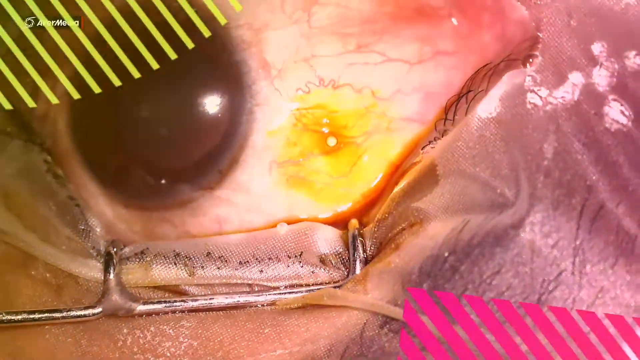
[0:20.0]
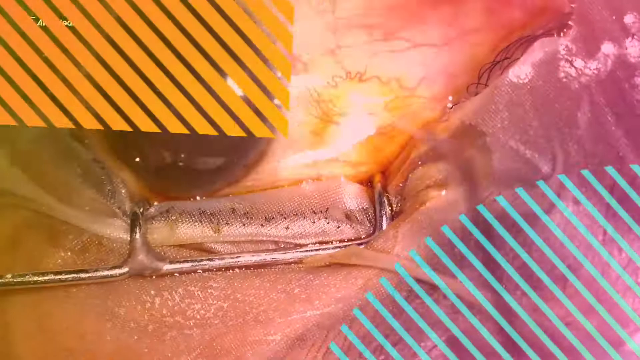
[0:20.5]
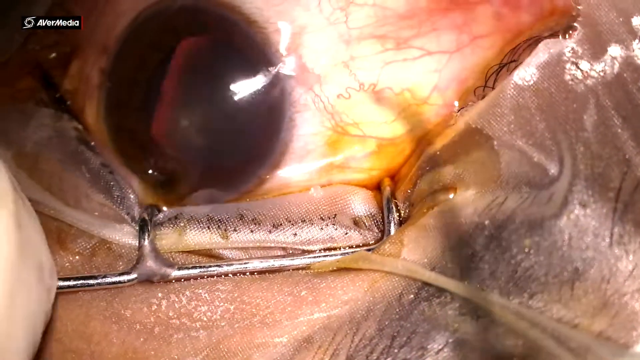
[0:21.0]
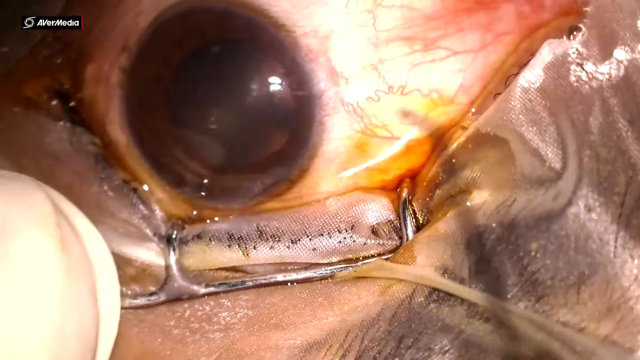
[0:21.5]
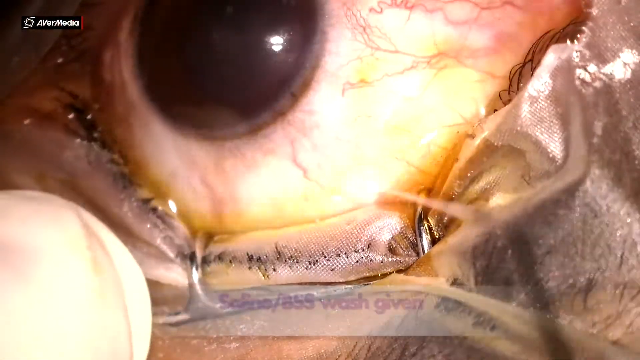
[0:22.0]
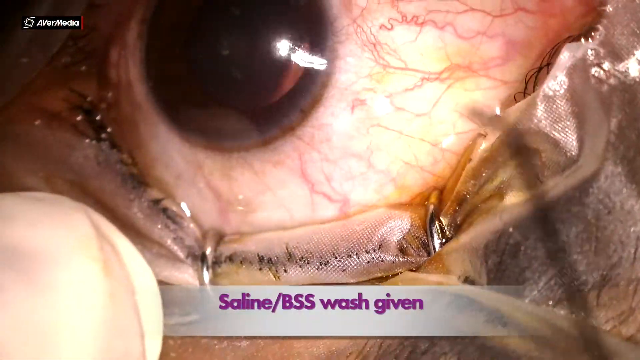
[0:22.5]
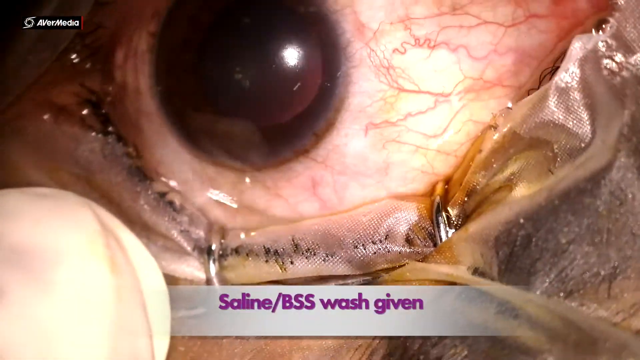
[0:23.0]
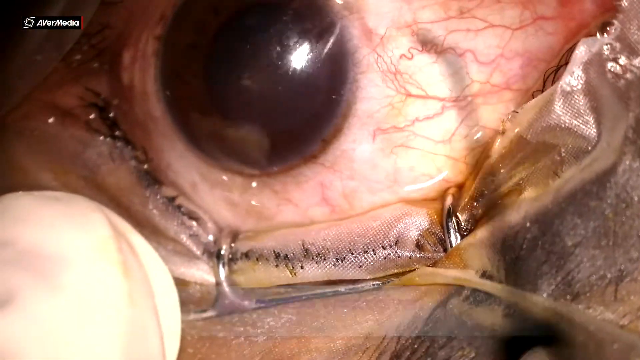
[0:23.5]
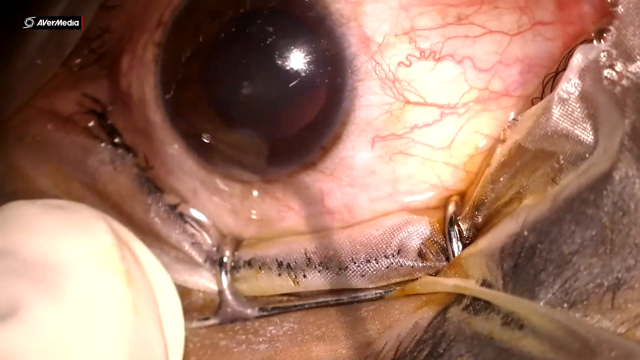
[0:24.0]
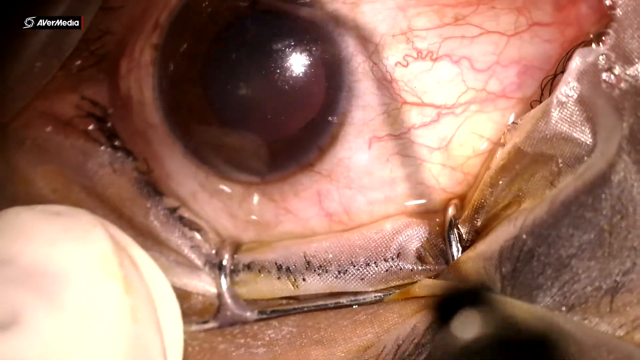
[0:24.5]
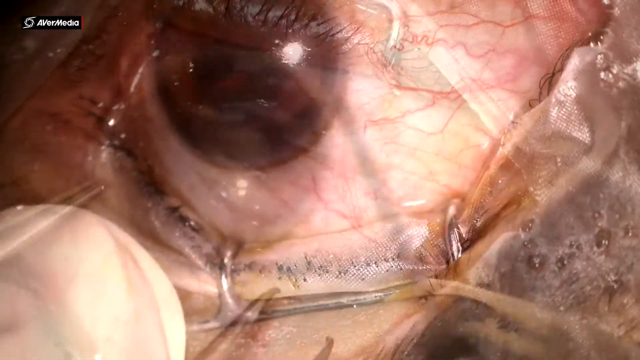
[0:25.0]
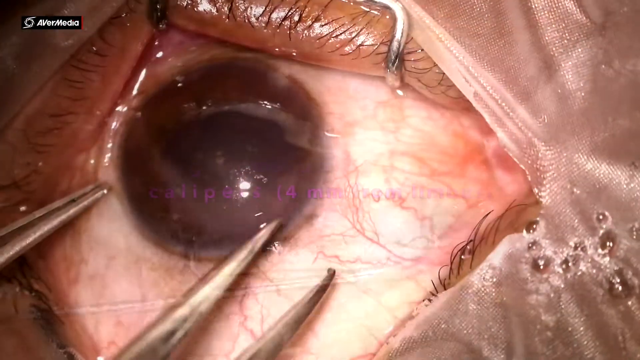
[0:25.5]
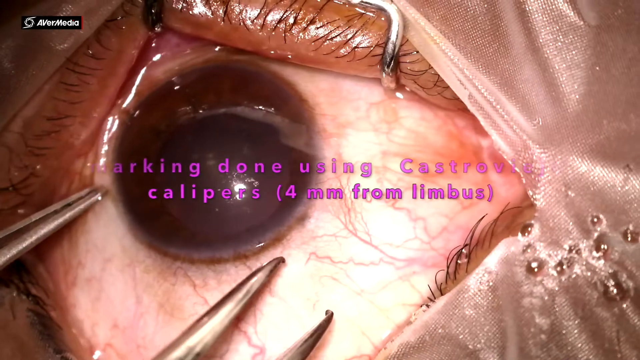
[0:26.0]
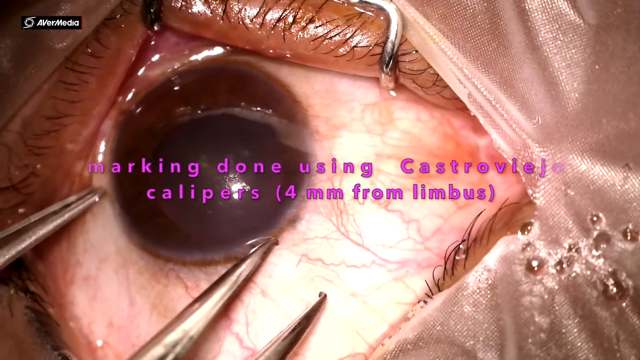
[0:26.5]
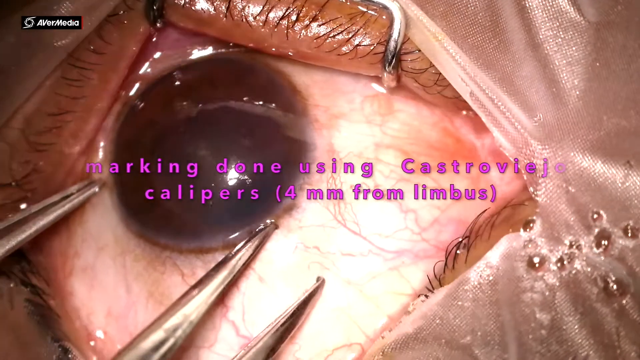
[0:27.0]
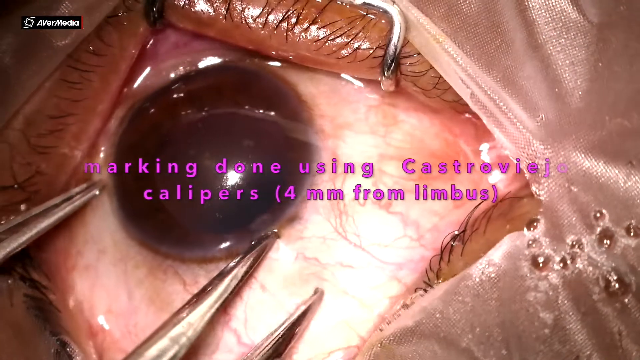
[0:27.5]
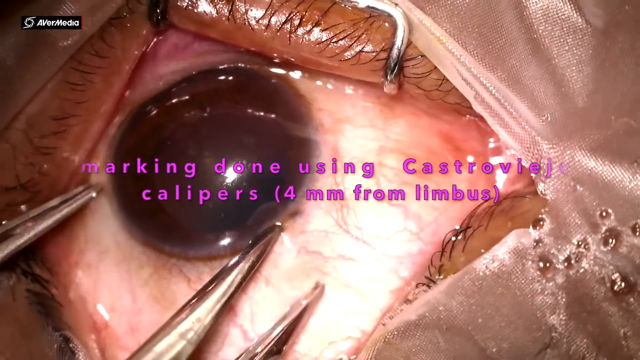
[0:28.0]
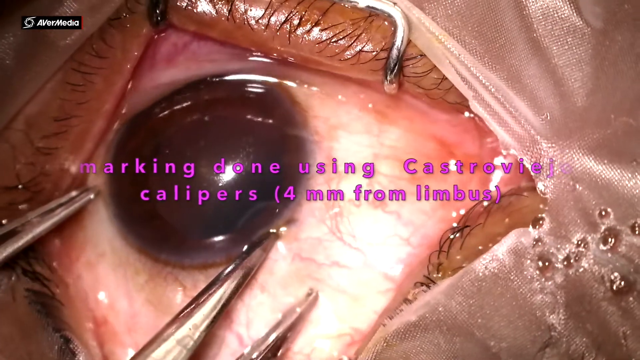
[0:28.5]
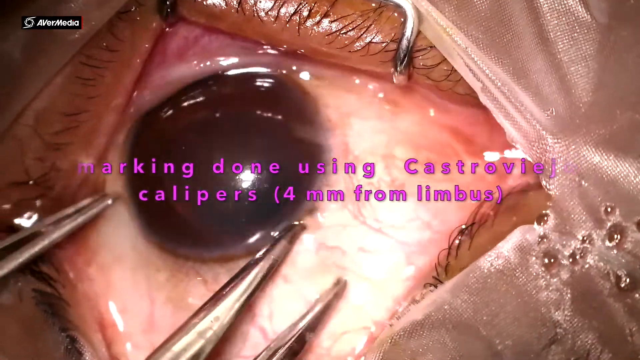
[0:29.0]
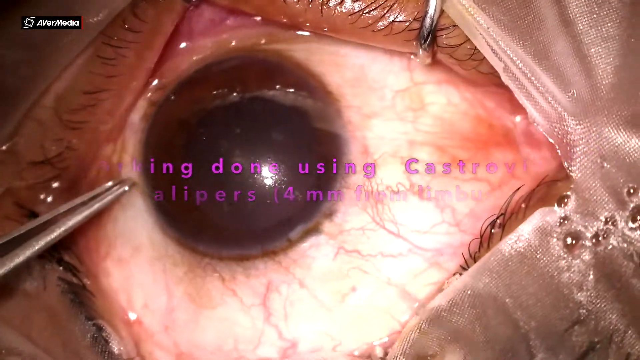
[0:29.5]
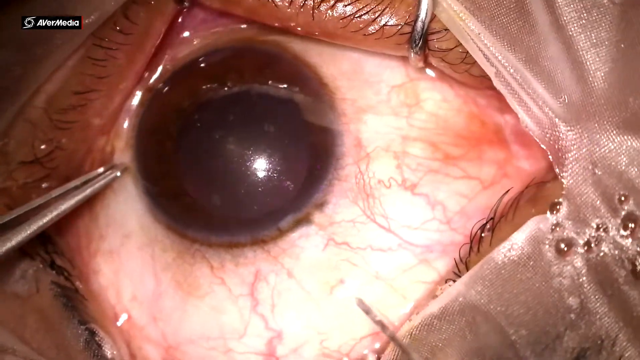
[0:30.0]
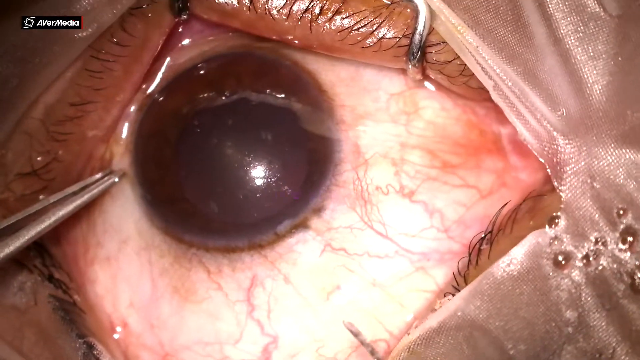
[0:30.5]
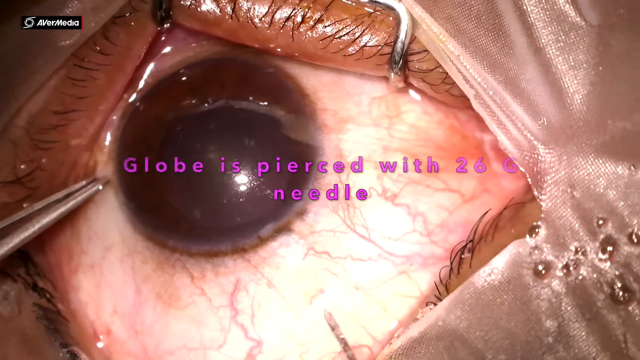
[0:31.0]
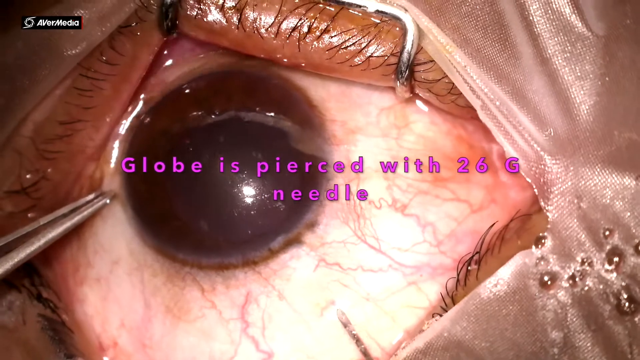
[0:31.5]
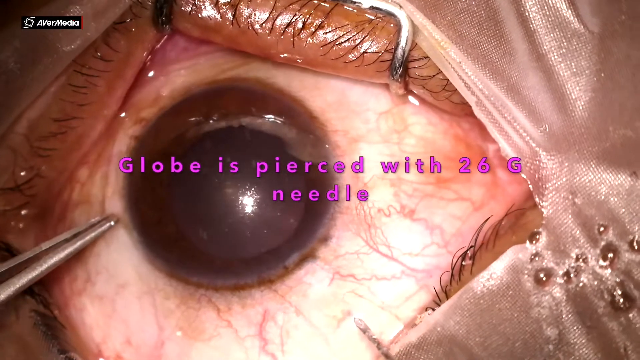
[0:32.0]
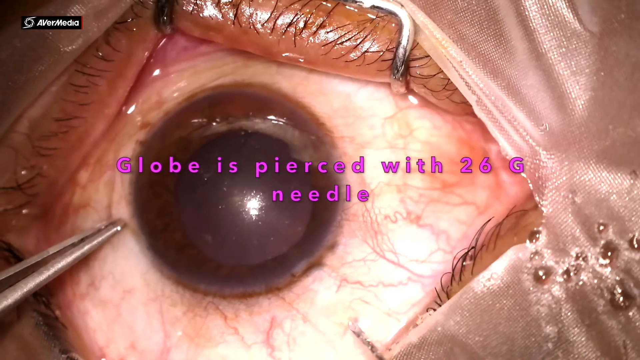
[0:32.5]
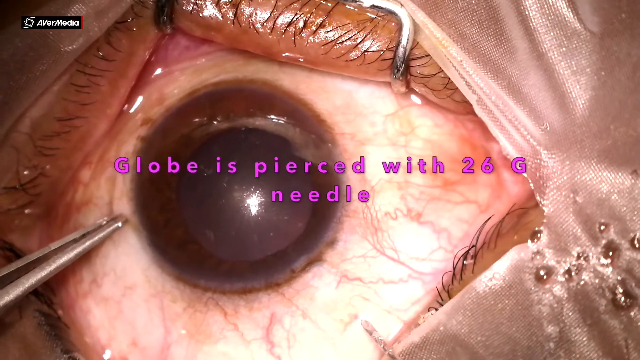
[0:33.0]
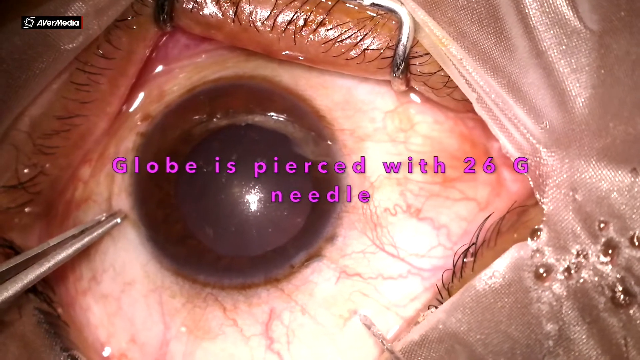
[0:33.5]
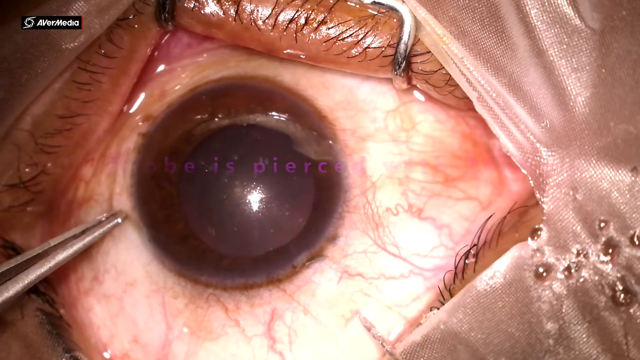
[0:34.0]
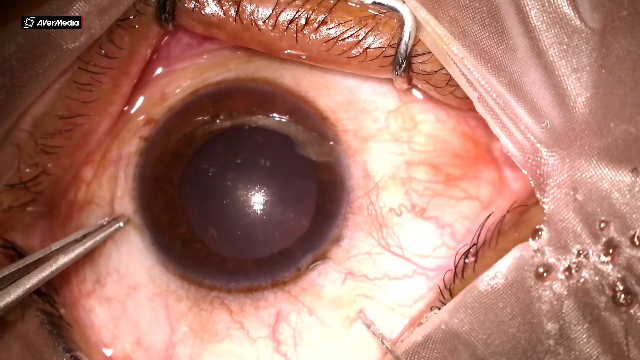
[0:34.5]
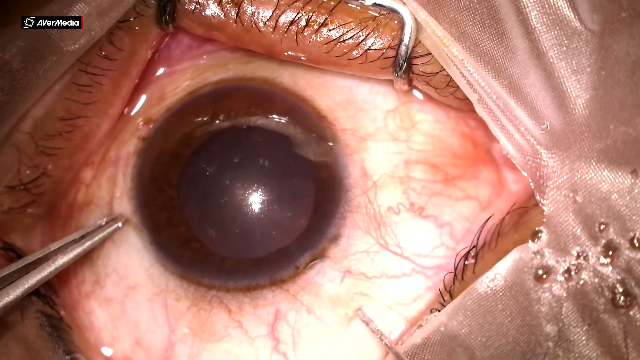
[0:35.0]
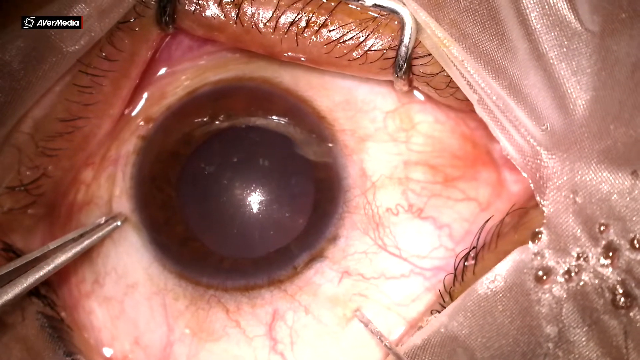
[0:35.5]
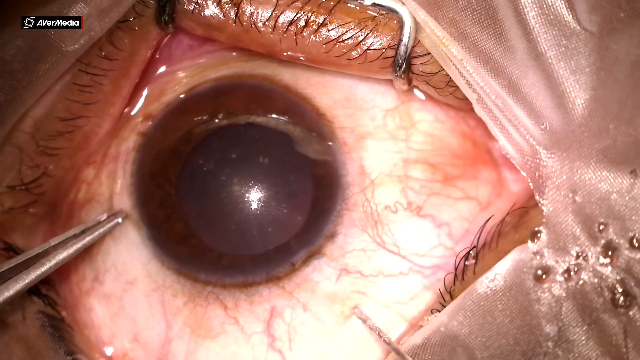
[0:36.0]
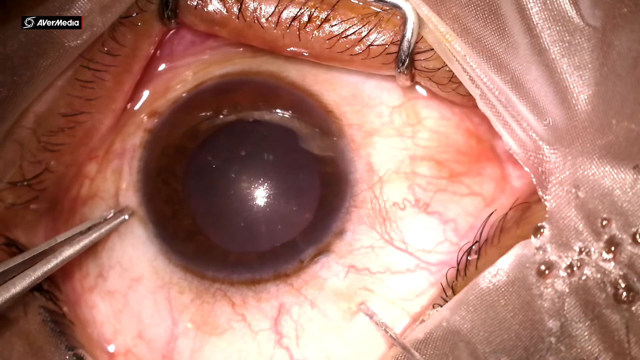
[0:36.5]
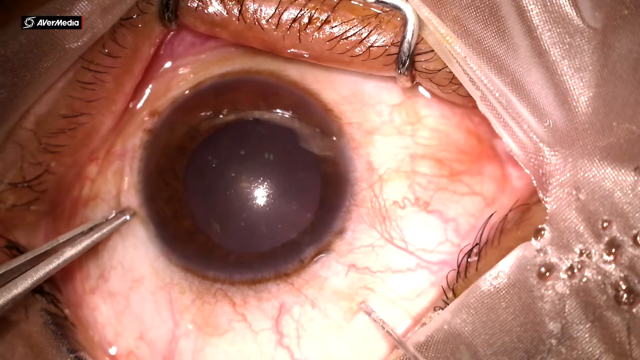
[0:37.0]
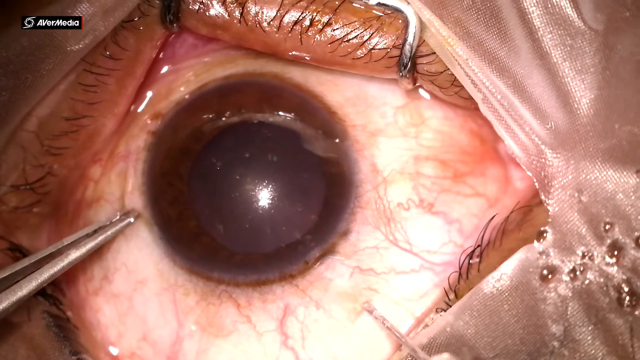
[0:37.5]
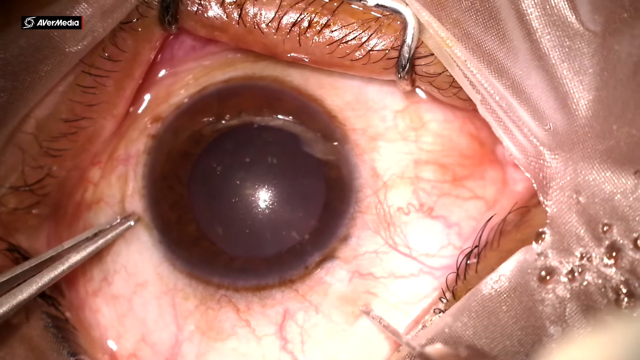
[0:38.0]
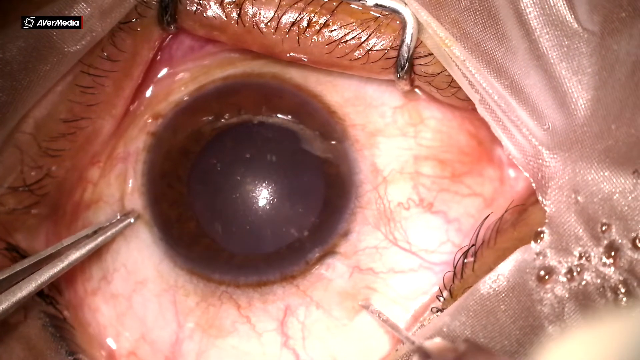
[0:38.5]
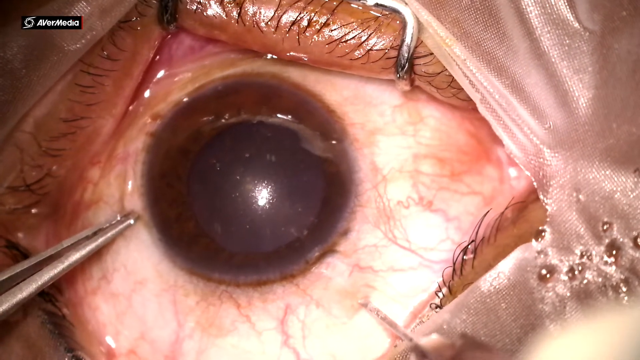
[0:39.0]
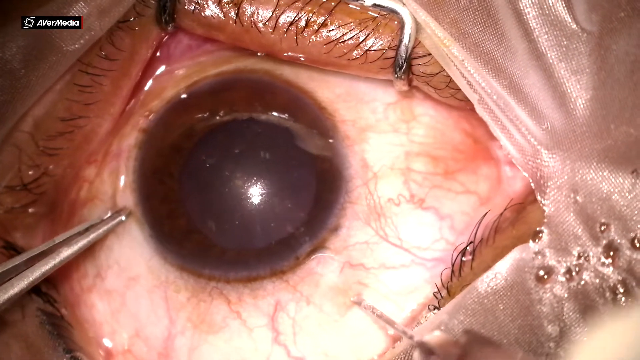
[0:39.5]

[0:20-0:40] The iodine leaves a yellow splotch on the eye, which appears to be carefully cleaned with water. At the bottom, purple text on a gradient gray background briefly reads "saline/BSS wash given". Purple text in the middle of the screen then begins "marking done using" and refers to calipers and "four millimeters from Limbus". Needles are then used to pierce what seems to be the eyeball, with text in the middle reading "globe is pierced with 26G needle".